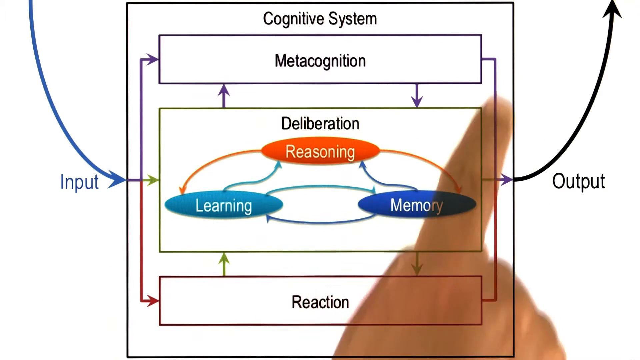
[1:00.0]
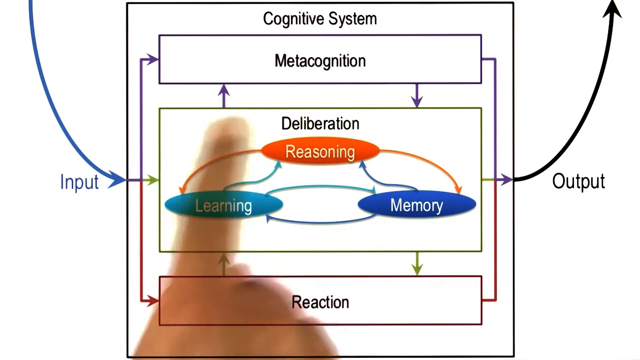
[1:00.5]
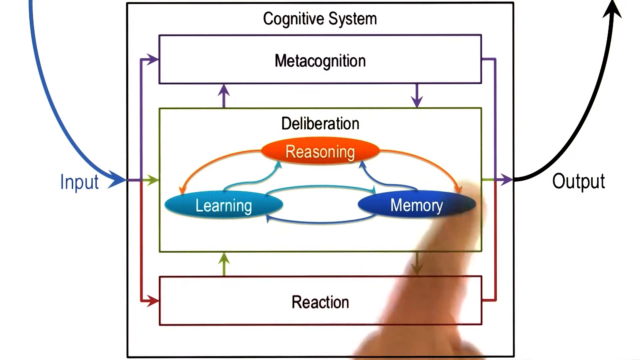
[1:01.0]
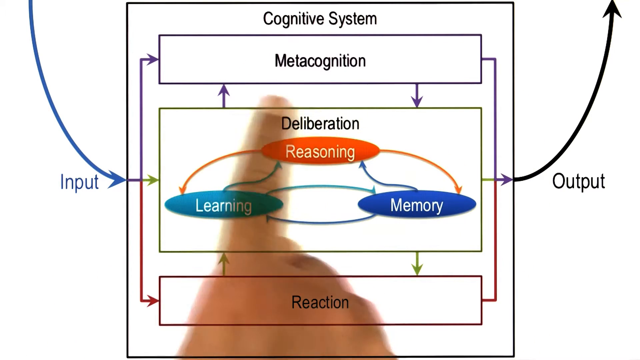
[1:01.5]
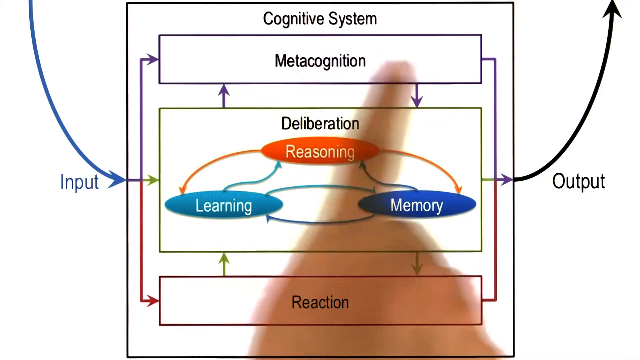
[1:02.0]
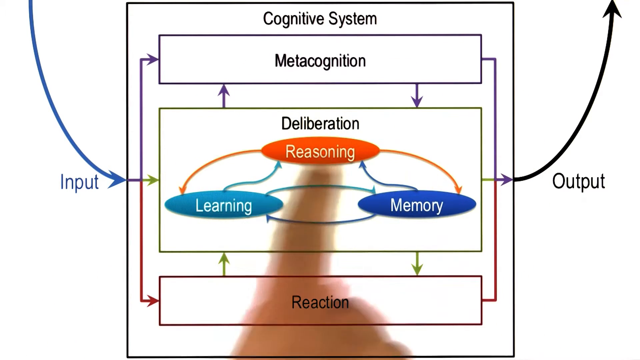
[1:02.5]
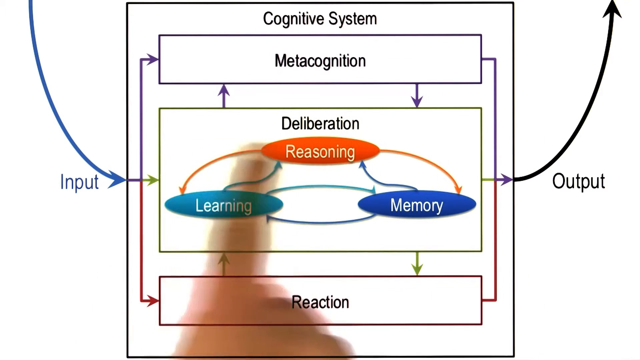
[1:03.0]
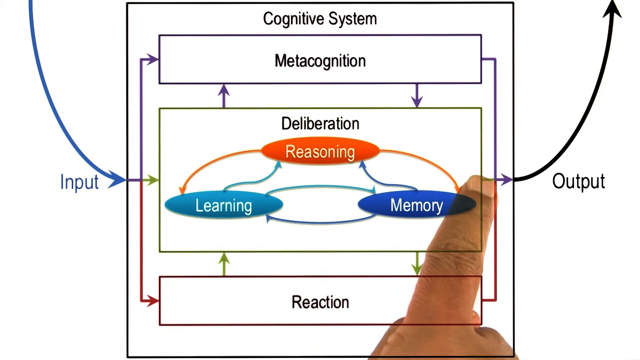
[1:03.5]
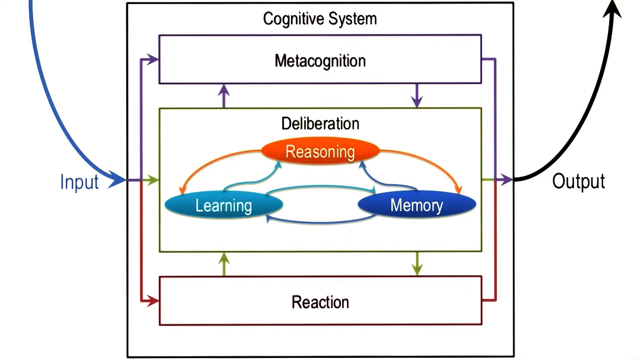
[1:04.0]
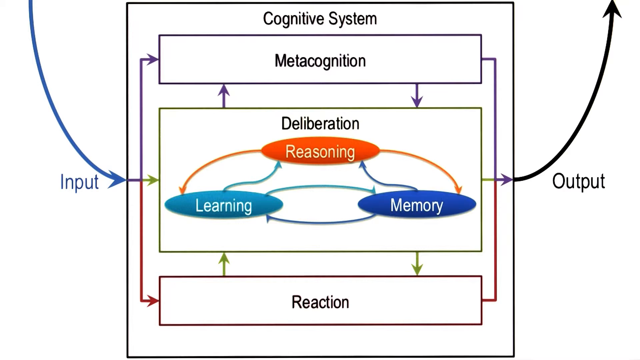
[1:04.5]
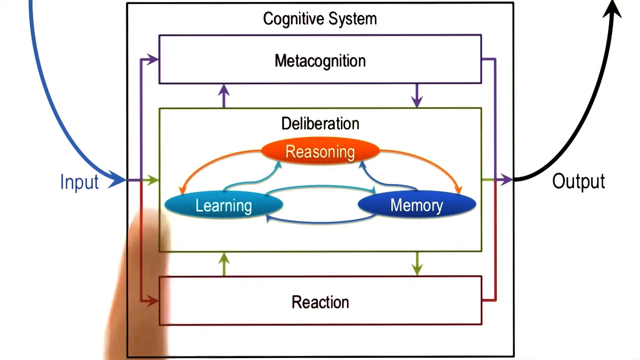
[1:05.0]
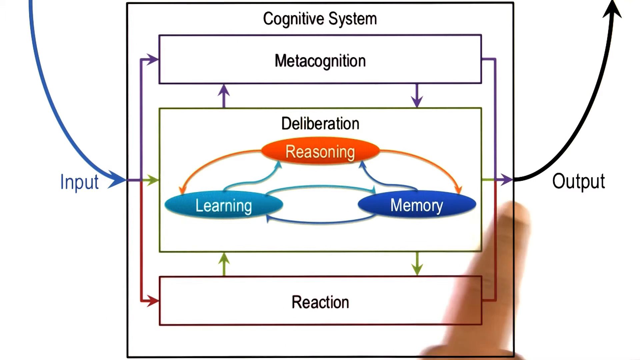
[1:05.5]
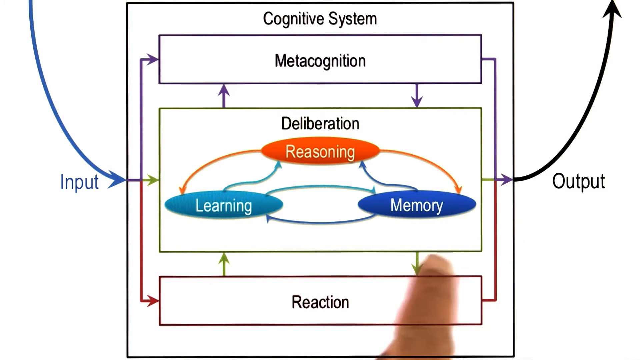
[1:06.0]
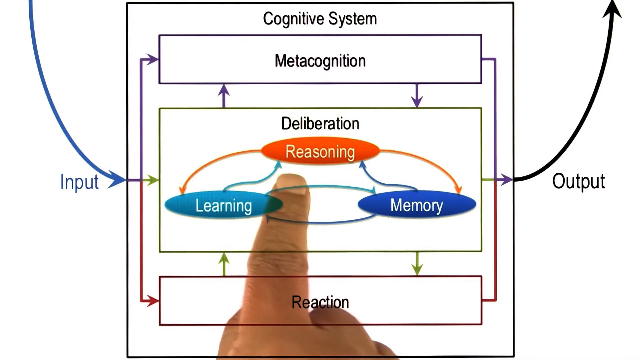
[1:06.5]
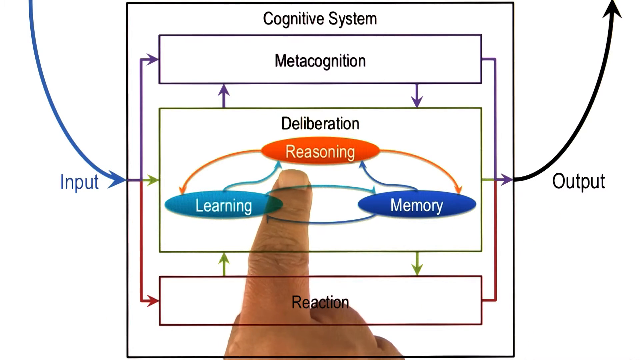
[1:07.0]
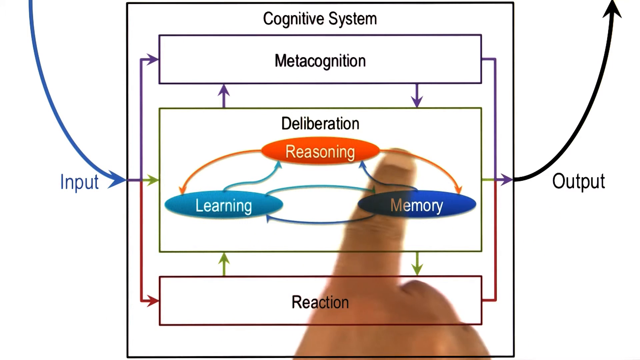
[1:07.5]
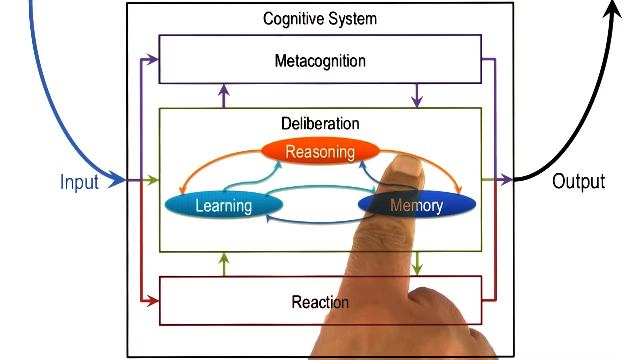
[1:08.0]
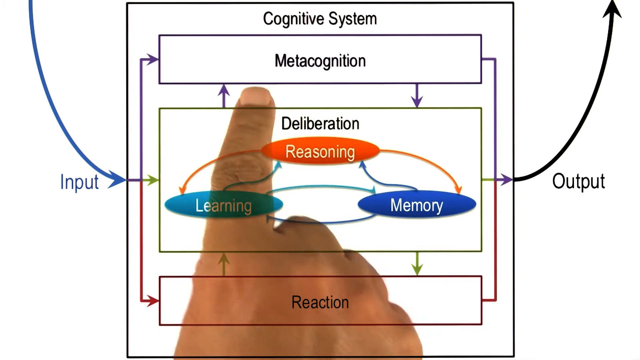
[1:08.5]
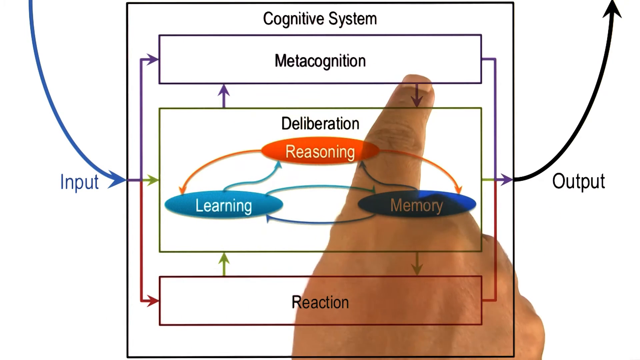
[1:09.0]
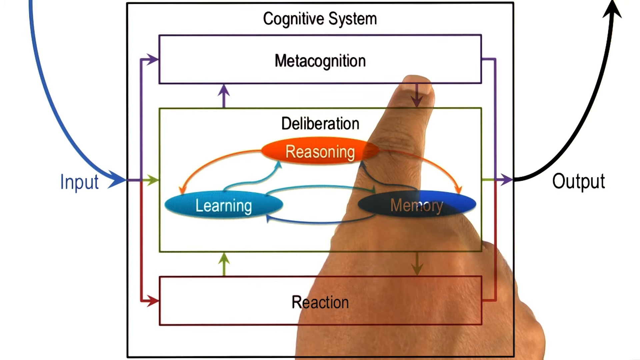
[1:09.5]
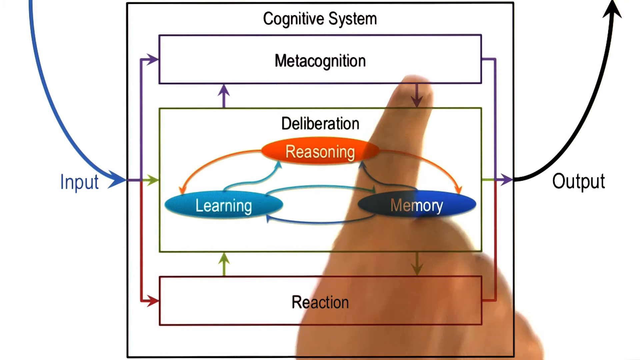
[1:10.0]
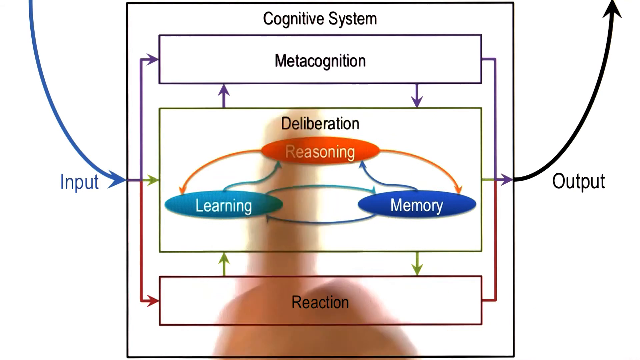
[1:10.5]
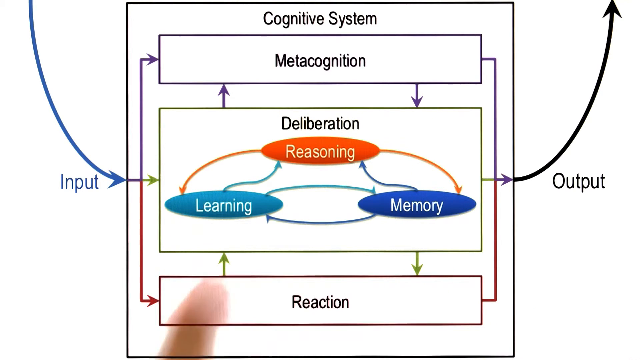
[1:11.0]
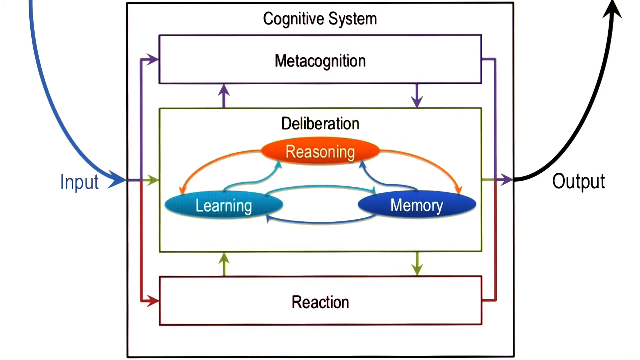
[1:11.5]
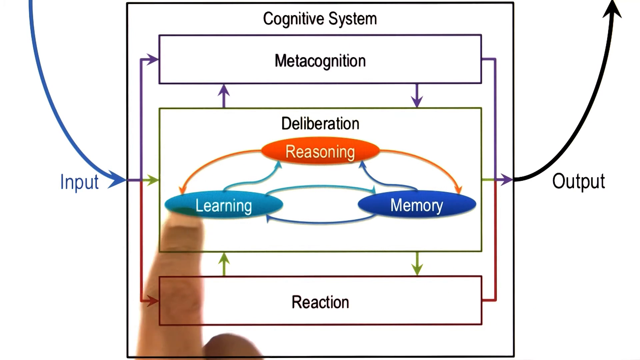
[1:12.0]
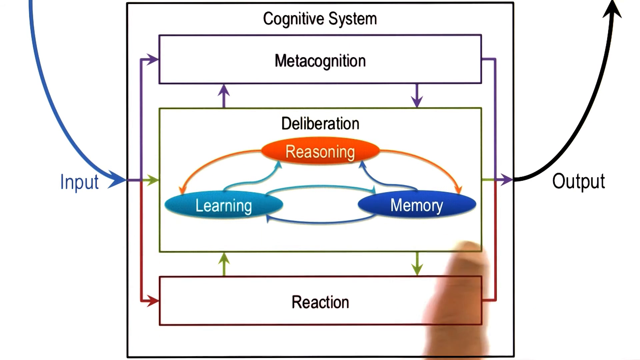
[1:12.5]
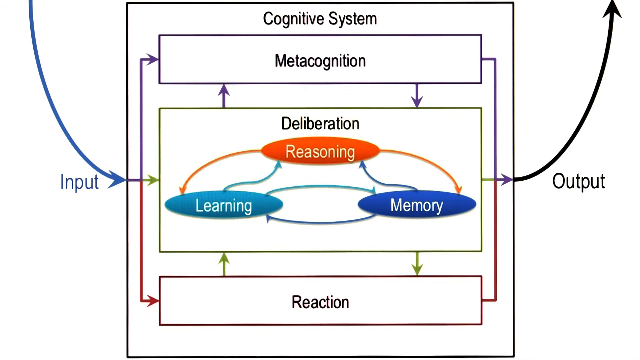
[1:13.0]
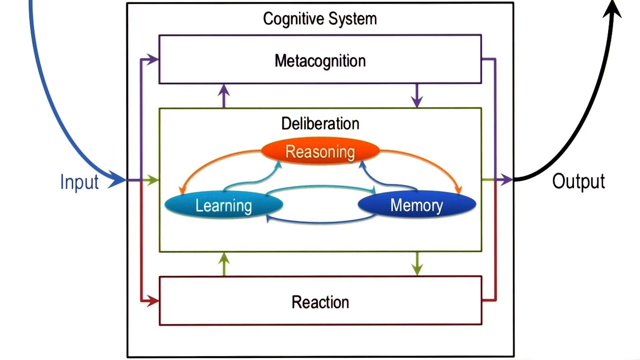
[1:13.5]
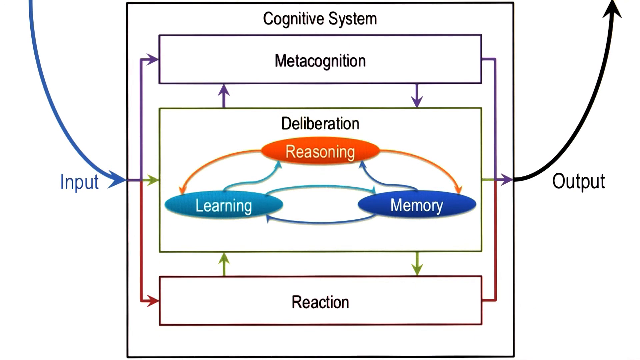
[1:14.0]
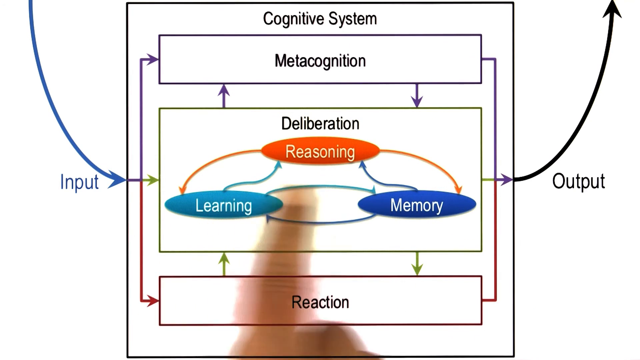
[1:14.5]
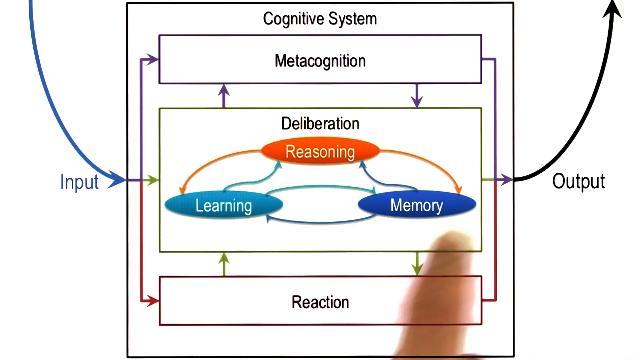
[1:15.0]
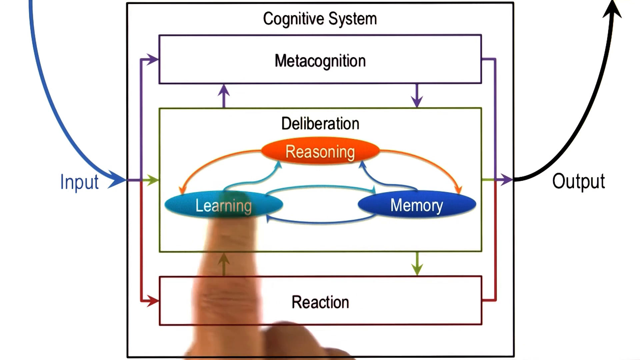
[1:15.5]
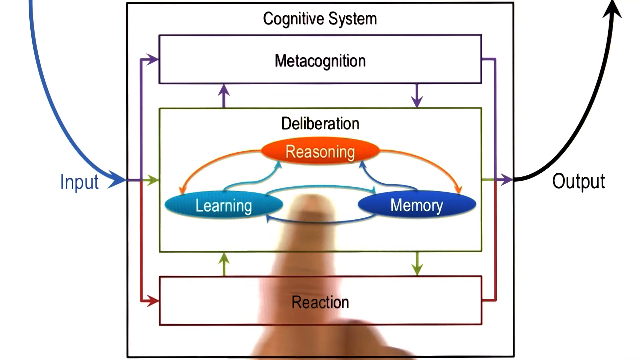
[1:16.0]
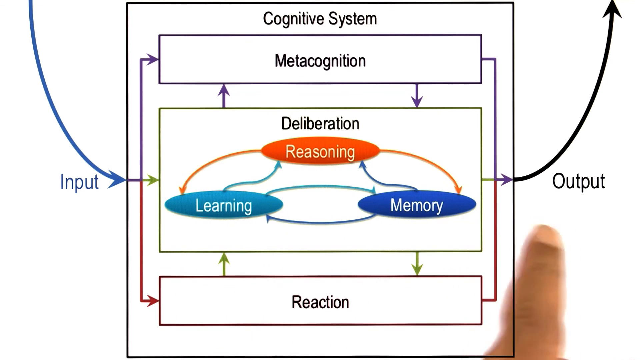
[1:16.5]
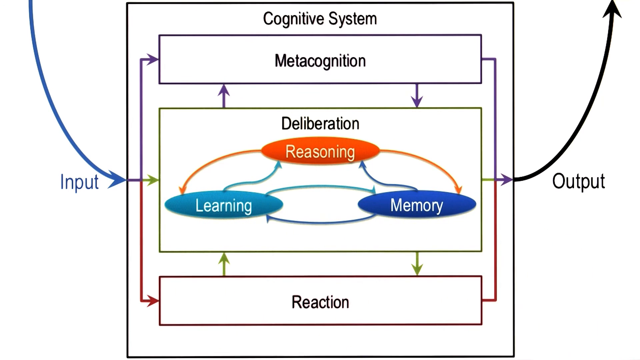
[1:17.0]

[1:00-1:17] The initial screen shows the cognition system, metacognition, deliberation, reasoning, learning and memory, and the emphasis seems to be on the middle portion of the graph, where deliberation, reasoning, learning and memory are. The human hand points to the middle of the graph, the pointing moving from learning to memory and from learning to memory again within the deliberation portion. The background is white and the picture quality is good. The wording of cognition, metacognition, deliberation and reaction is written in black. The arrow labeled "input" is blue and the arrow labeled "output" is black. The hand looks like a white person's hand, pointing to all the wording on the screen.